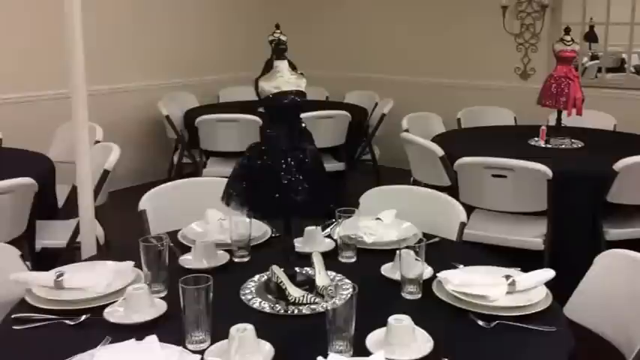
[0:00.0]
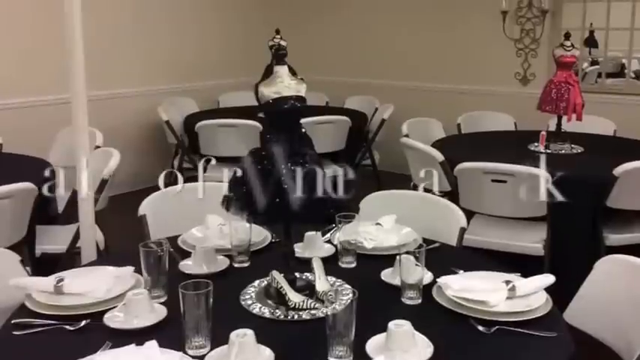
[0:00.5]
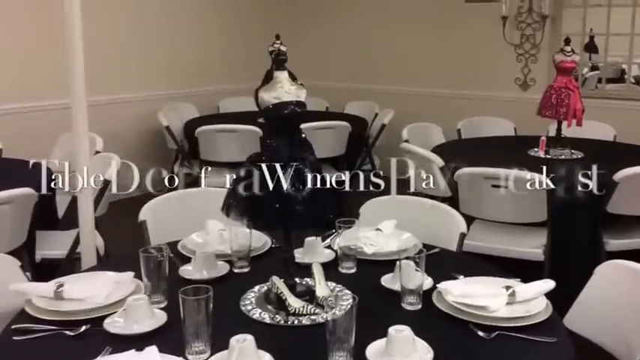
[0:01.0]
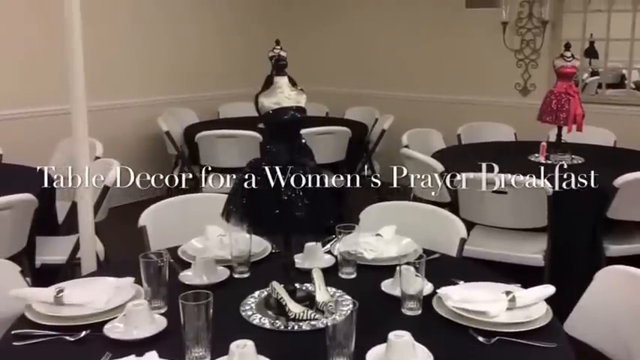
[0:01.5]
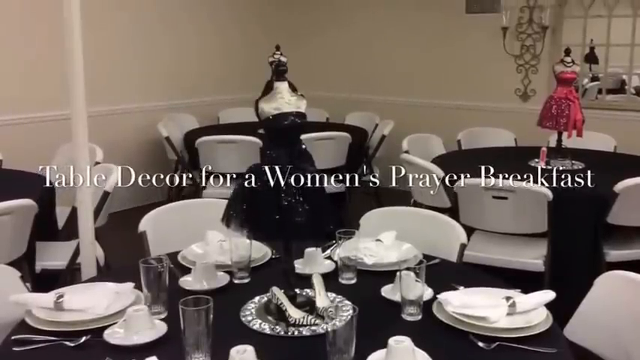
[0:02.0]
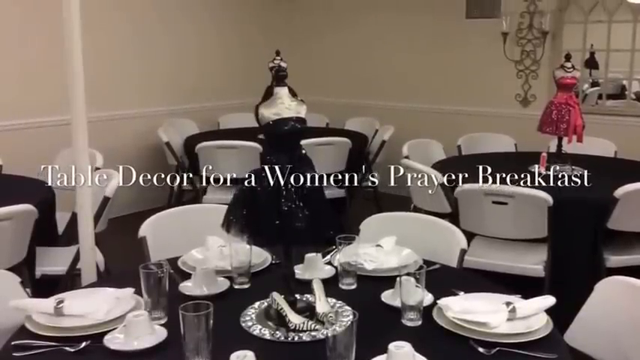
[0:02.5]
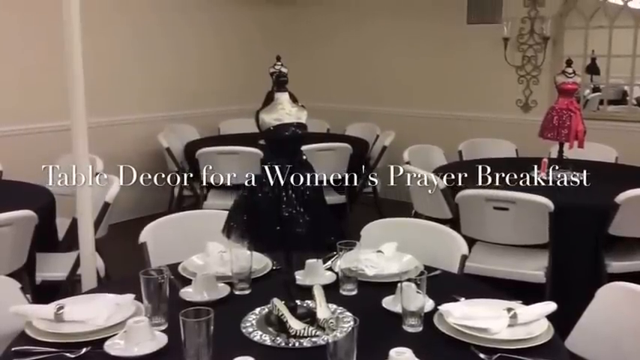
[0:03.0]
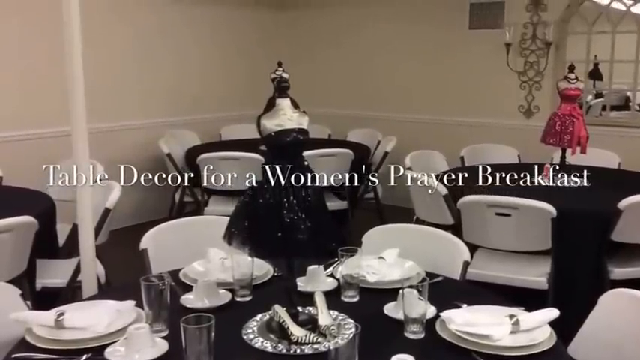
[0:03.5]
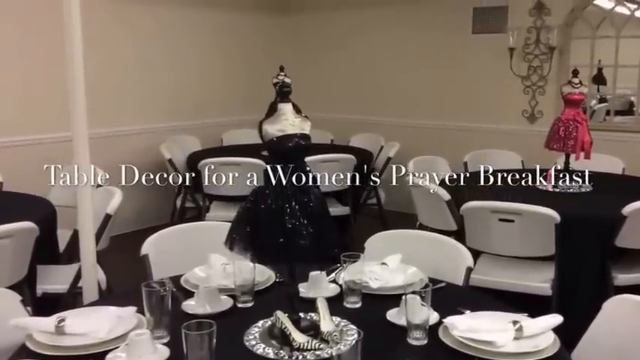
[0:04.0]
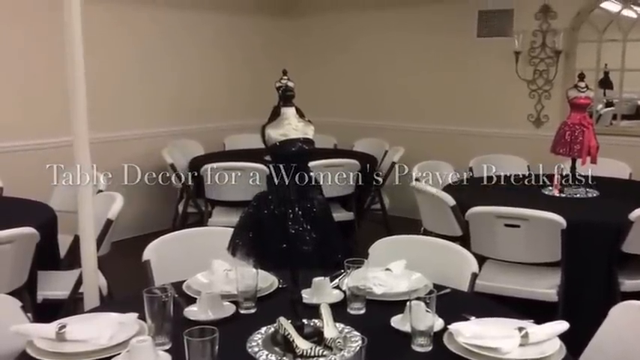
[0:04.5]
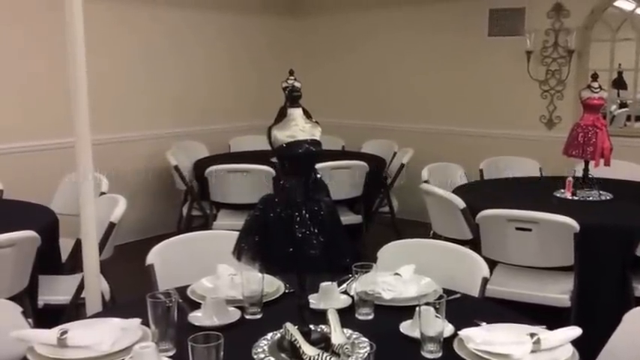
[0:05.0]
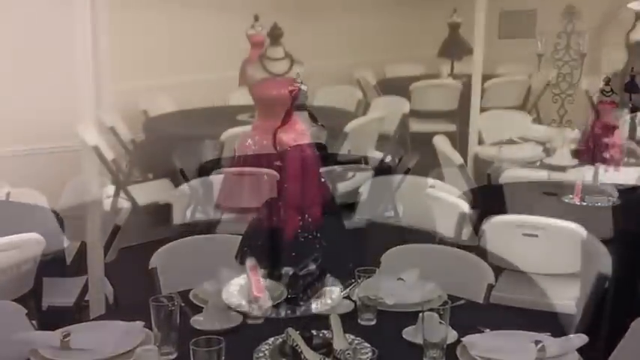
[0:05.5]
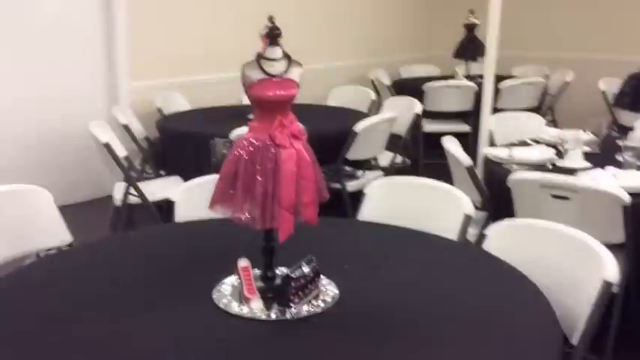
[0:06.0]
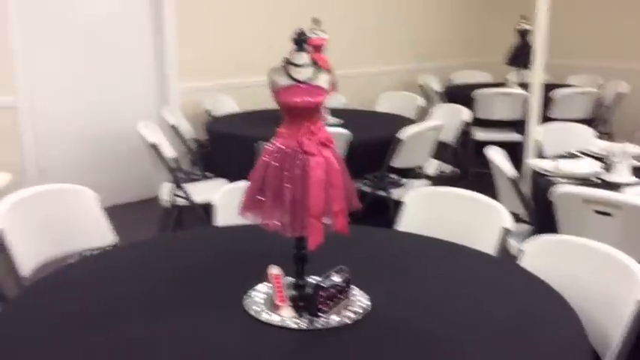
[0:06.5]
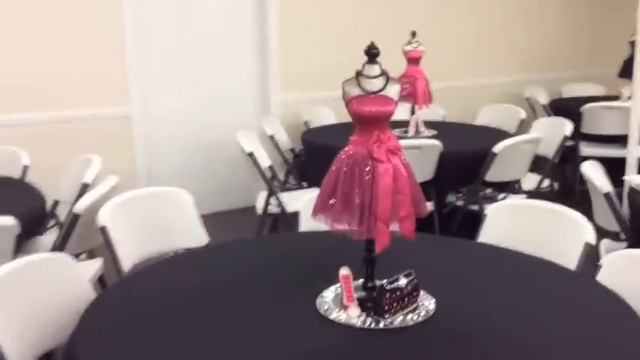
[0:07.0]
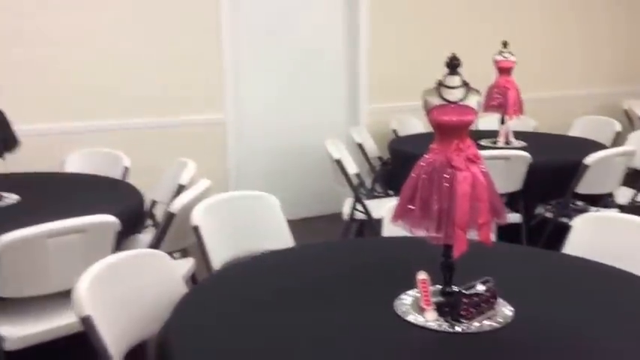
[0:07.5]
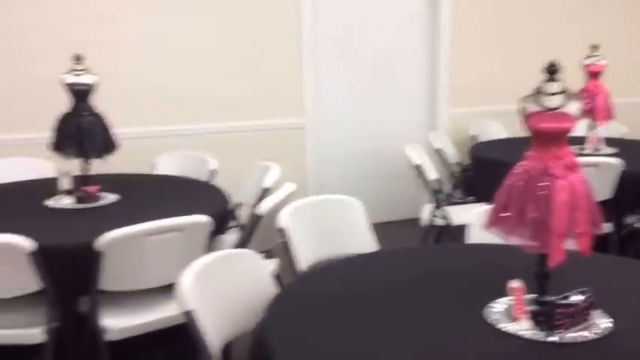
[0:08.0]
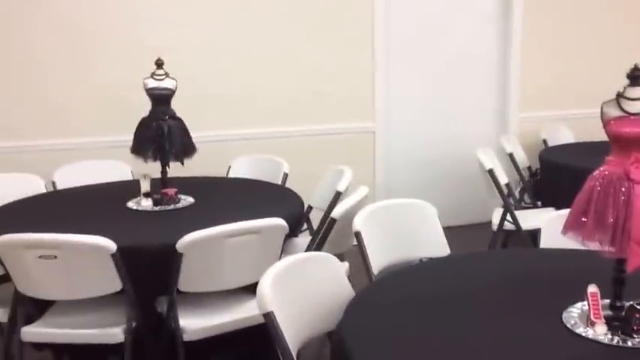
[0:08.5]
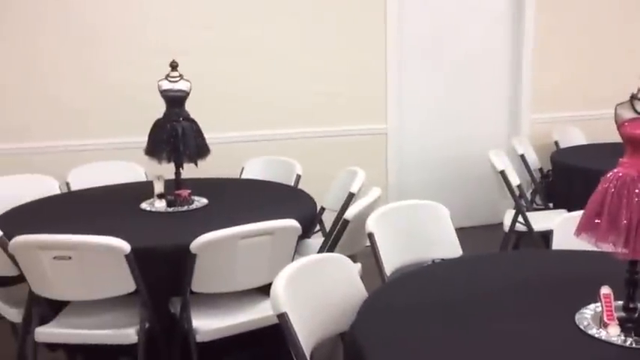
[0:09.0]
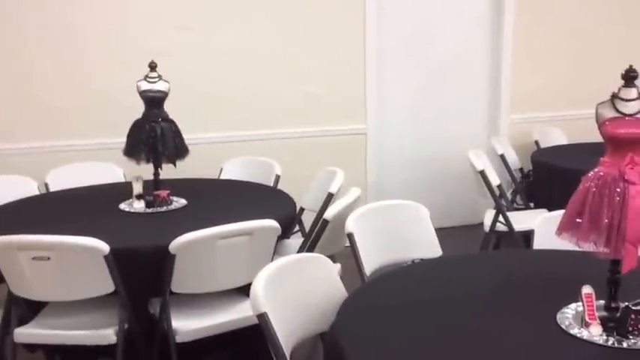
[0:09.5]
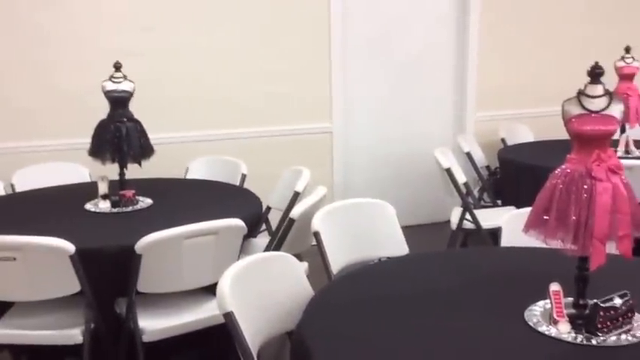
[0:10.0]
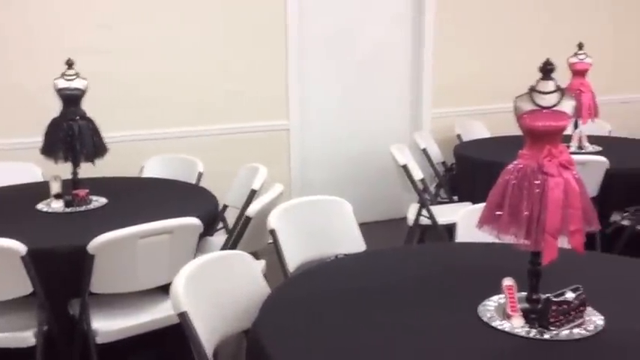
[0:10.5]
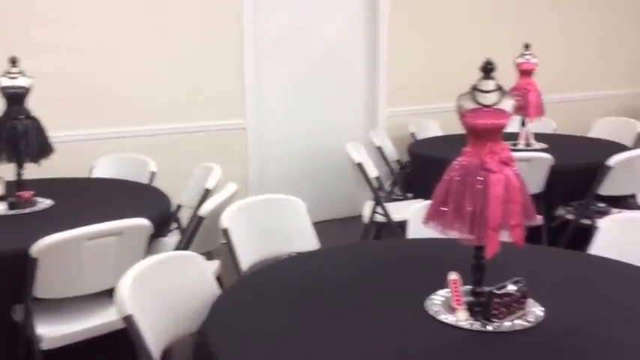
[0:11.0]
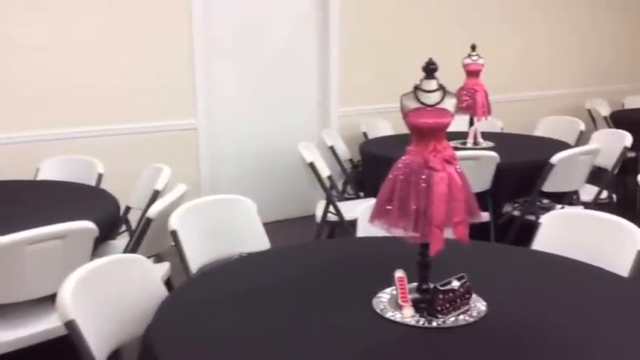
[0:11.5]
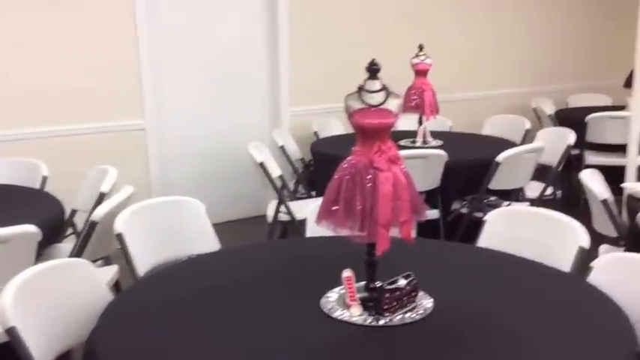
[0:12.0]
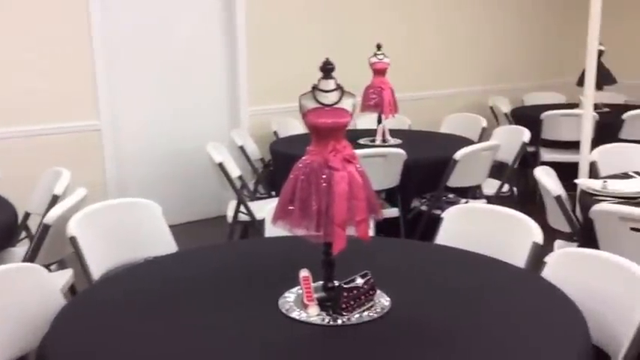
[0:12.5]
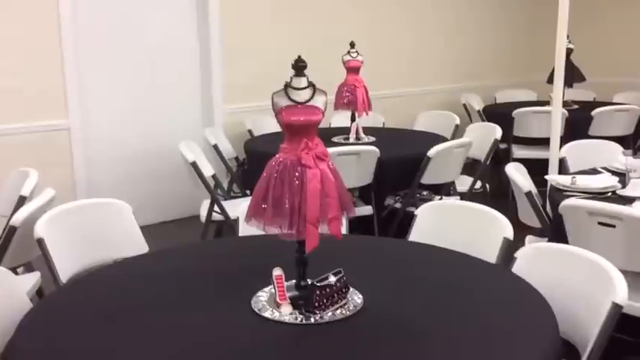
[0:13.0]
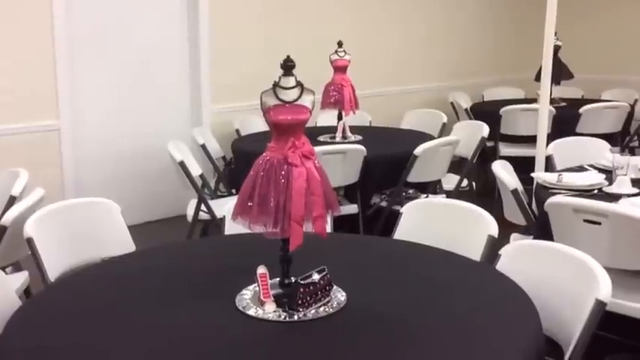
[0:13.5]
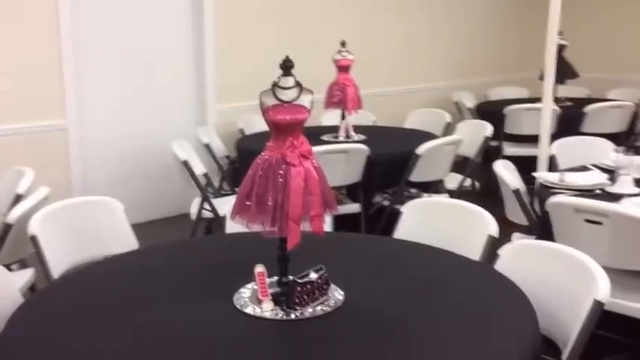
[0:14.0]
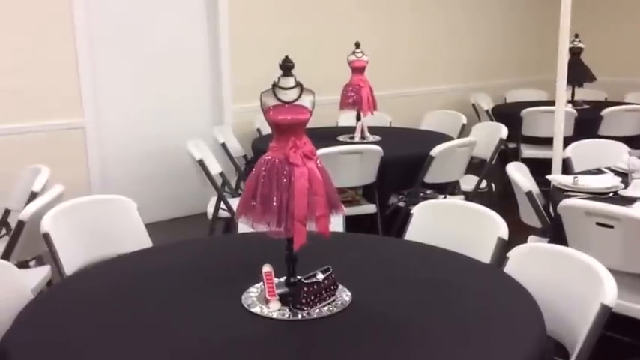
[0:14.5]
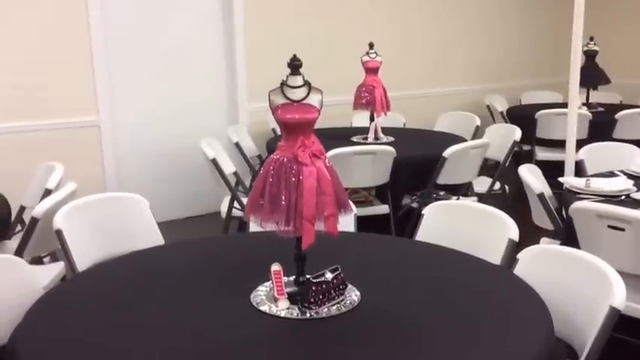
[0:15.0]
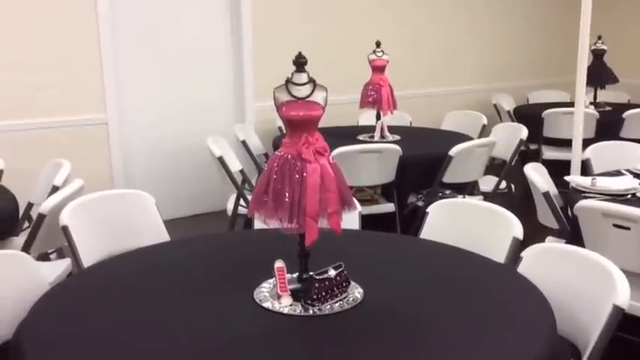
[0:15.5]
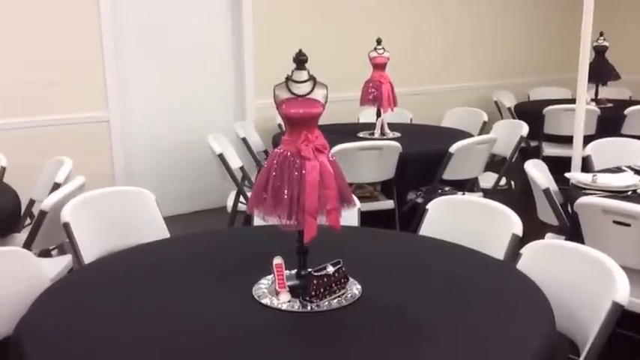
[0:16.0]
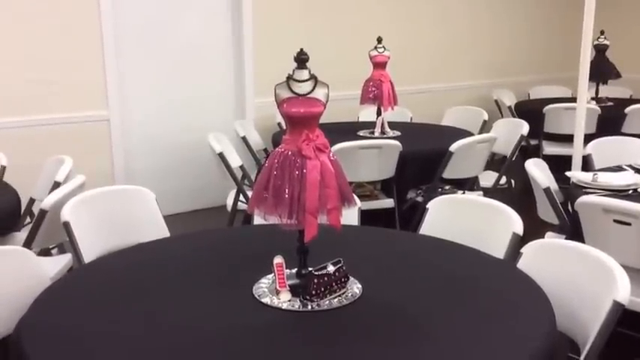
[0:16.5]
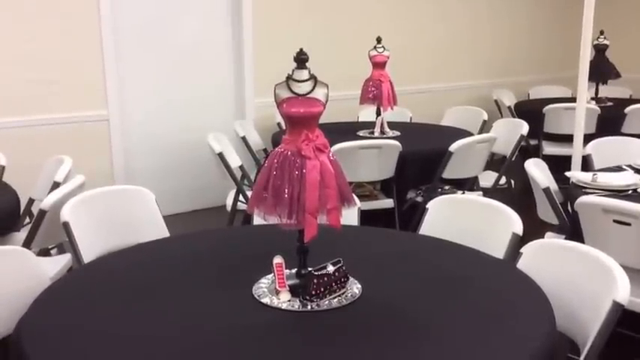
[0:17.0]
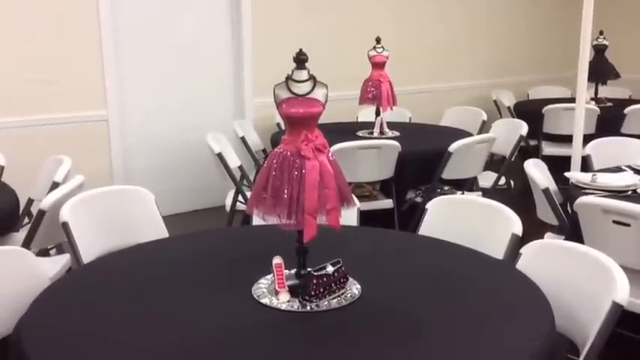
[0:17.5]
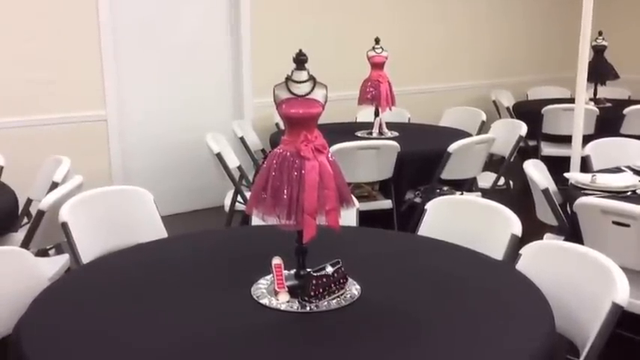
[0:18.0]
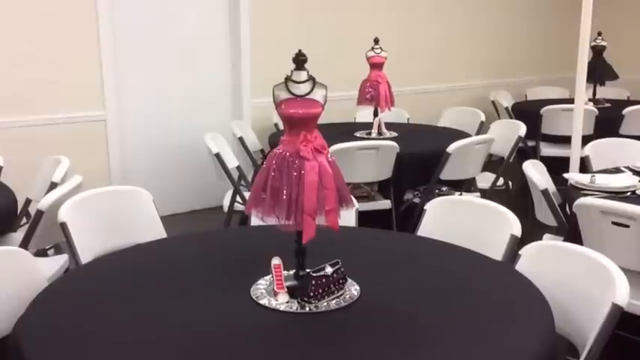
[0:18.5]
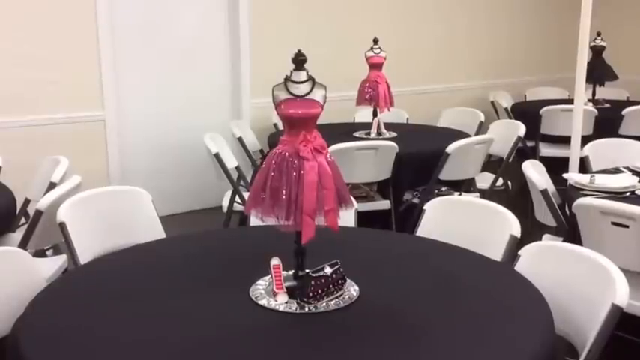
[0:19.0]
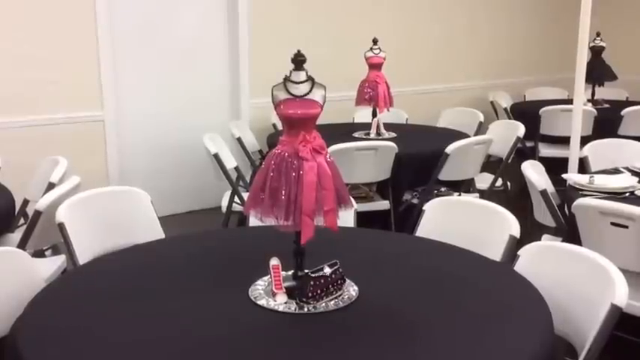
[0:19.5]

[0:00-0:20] Several tables, mostly black and white, appear, and the table closest to the viewer holds a lot of tableware. There are torso-only mannequins wearing black dresses and pink dresses; the nearest one wears a black dress, and one farther away on the right wears a pink one. The table in front has two plates stacked on top of each other, a folded napkin with a little belt around it, probably with utensils inside, and mostly forks plus a few knives arranged around the plates. Below the mannequin in front there is a pair of high heels. As the view scrolls up, text appears to read "Table Decker for a woman's prayer breakfast." Then sort of live footage begins of a person walking around showing the different tables, mainly showing the same things as before.